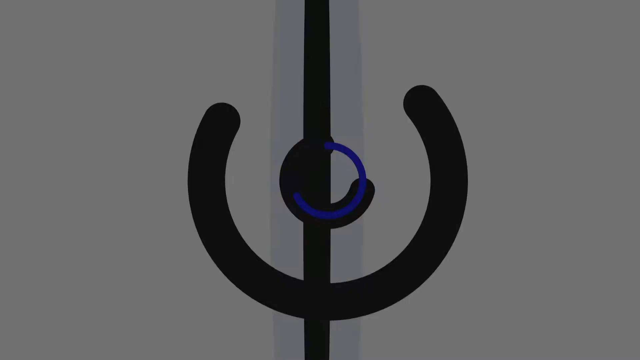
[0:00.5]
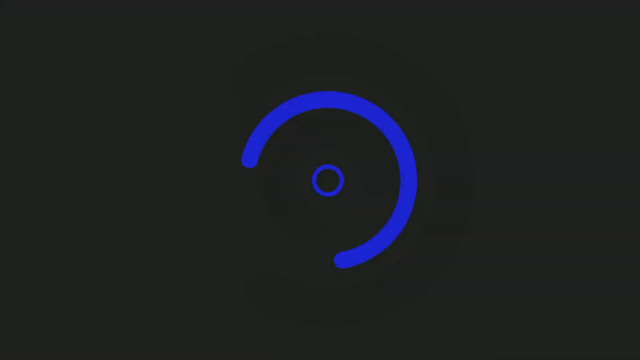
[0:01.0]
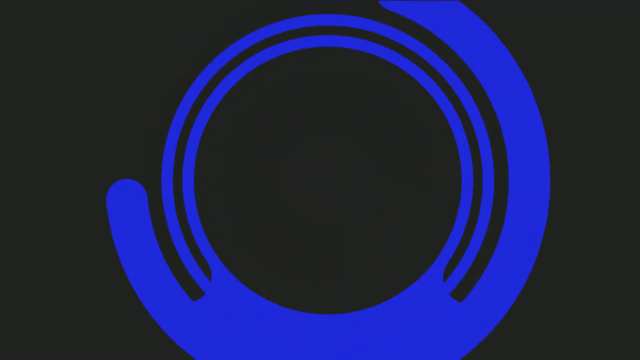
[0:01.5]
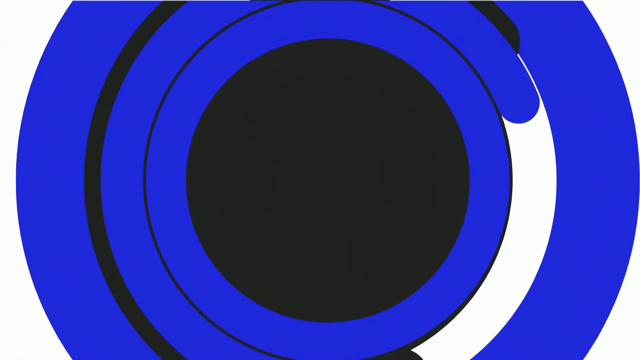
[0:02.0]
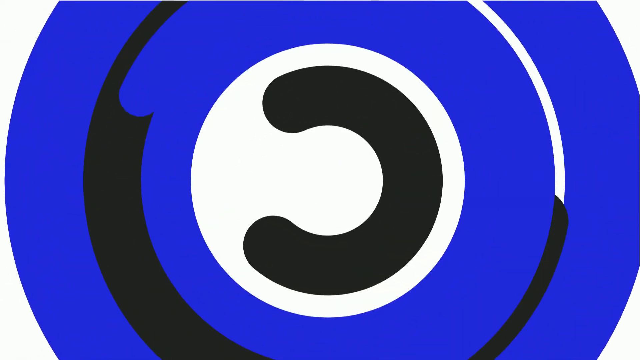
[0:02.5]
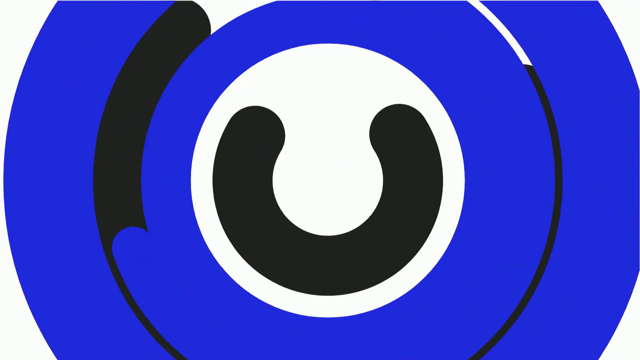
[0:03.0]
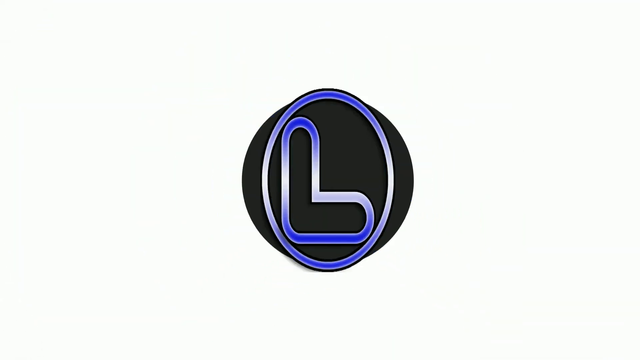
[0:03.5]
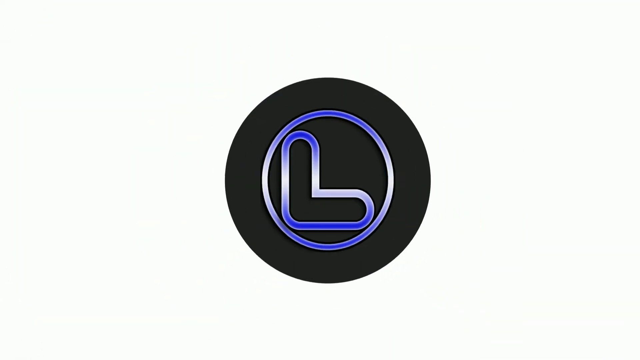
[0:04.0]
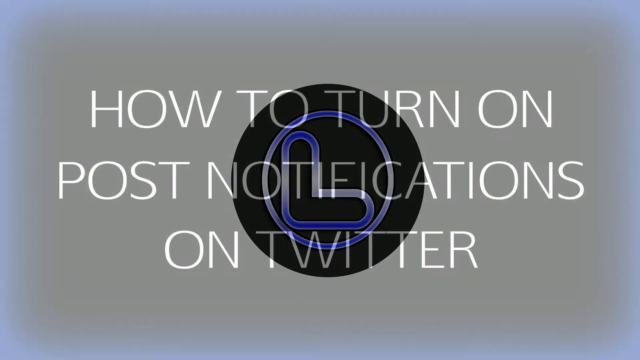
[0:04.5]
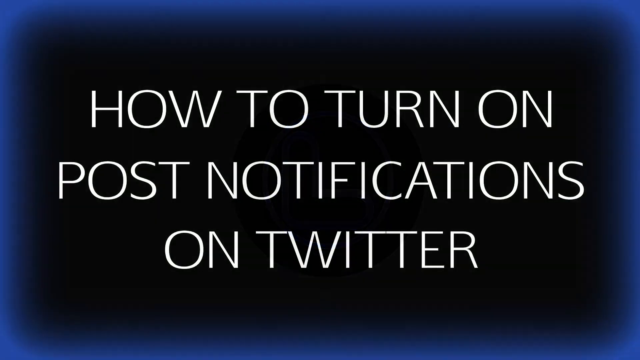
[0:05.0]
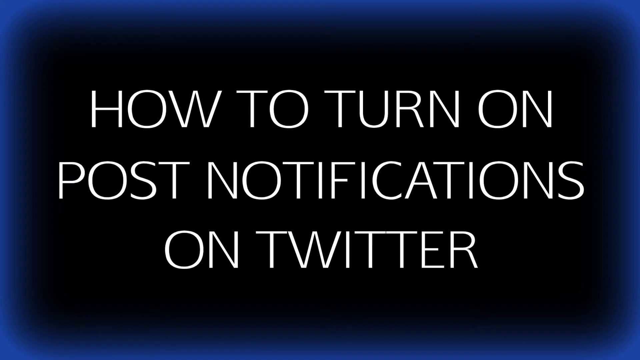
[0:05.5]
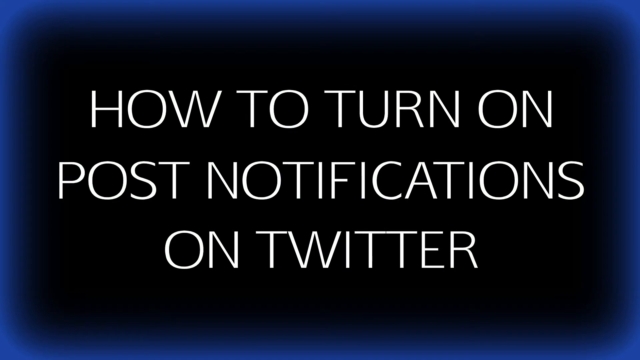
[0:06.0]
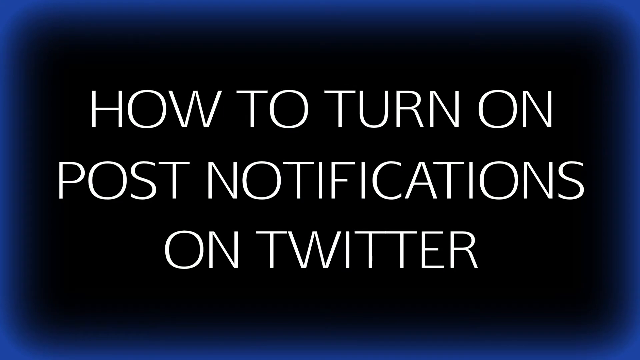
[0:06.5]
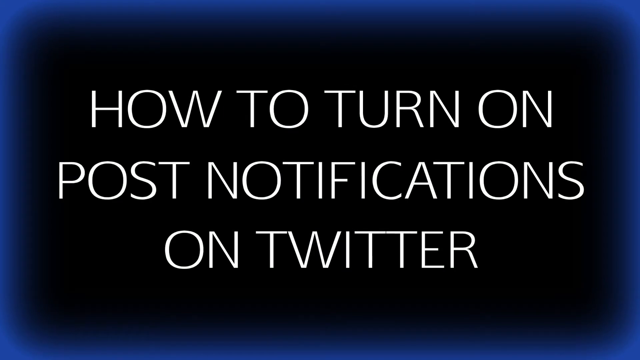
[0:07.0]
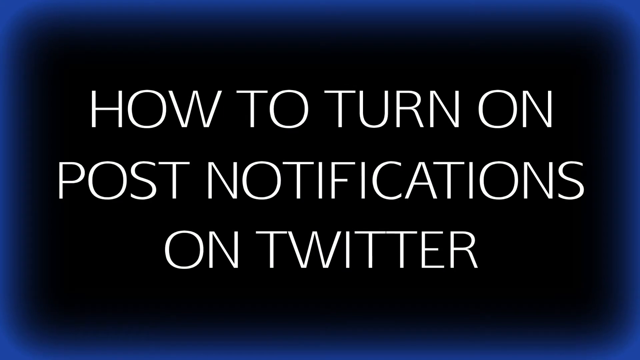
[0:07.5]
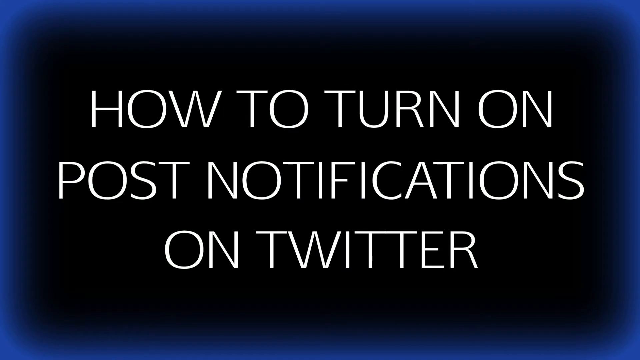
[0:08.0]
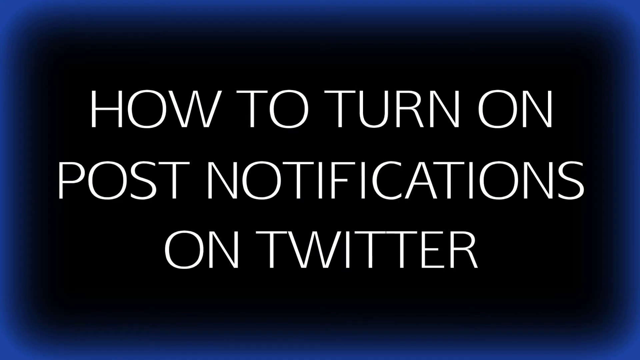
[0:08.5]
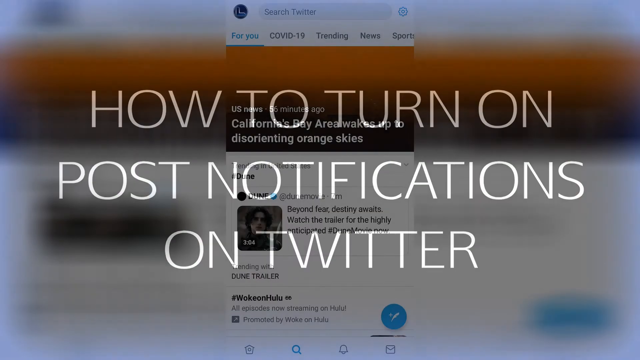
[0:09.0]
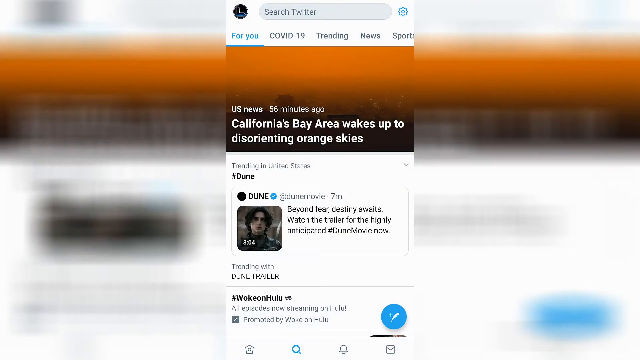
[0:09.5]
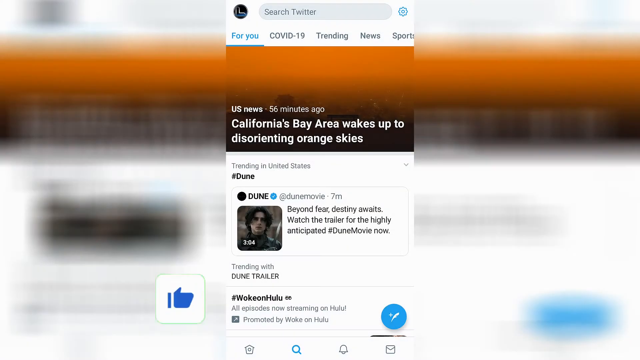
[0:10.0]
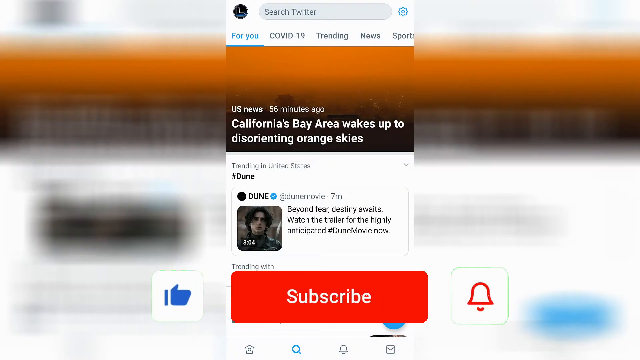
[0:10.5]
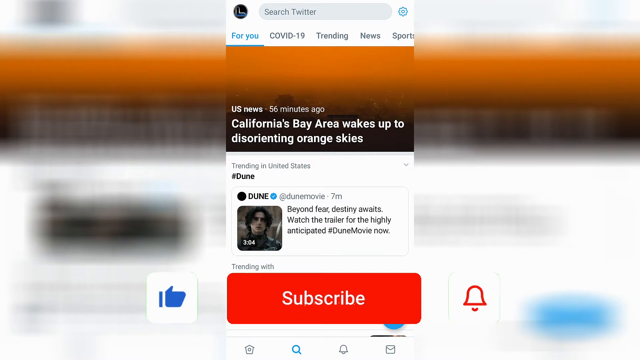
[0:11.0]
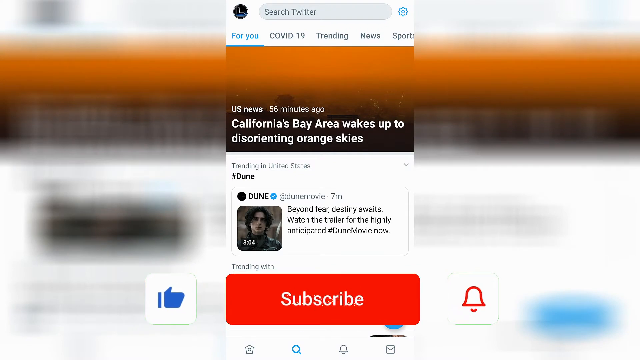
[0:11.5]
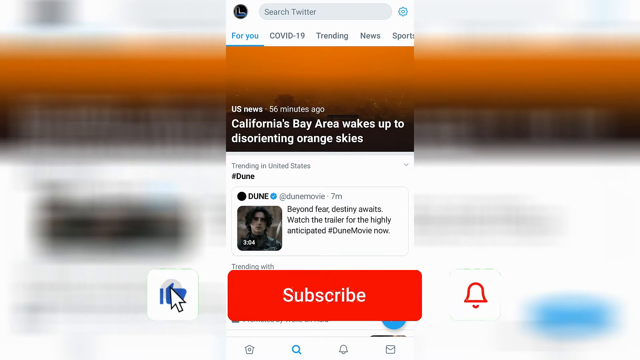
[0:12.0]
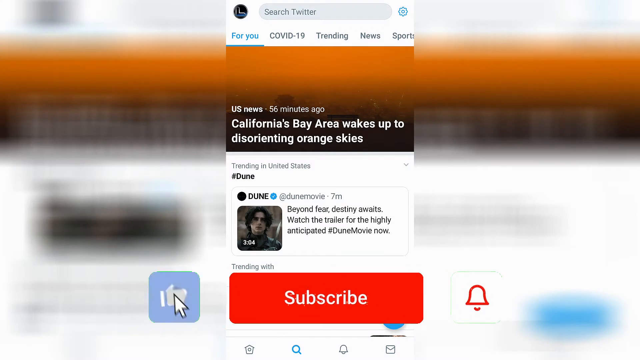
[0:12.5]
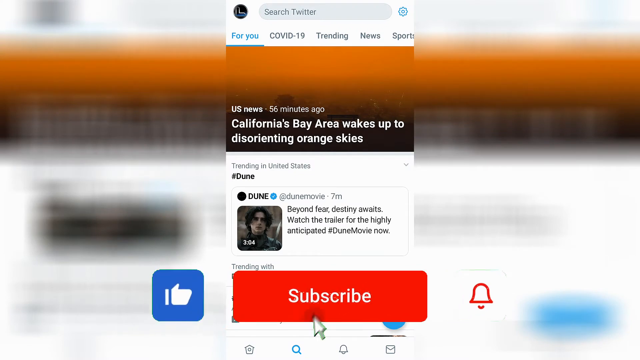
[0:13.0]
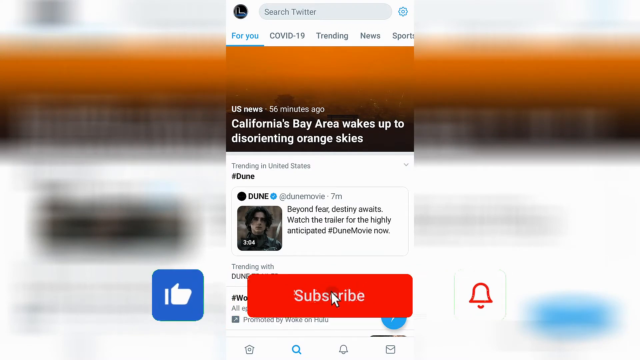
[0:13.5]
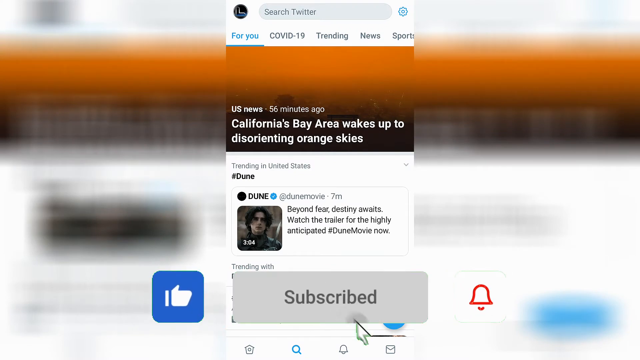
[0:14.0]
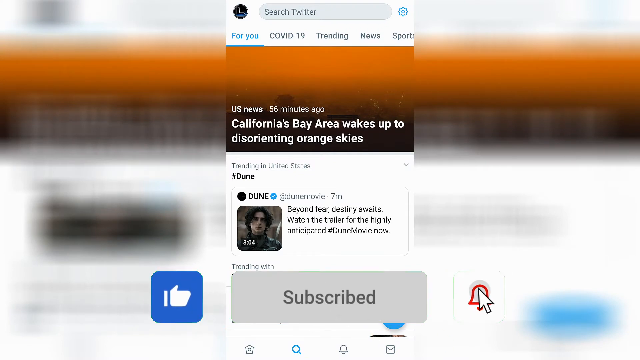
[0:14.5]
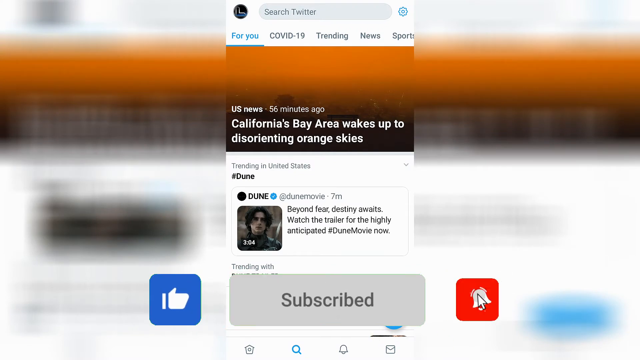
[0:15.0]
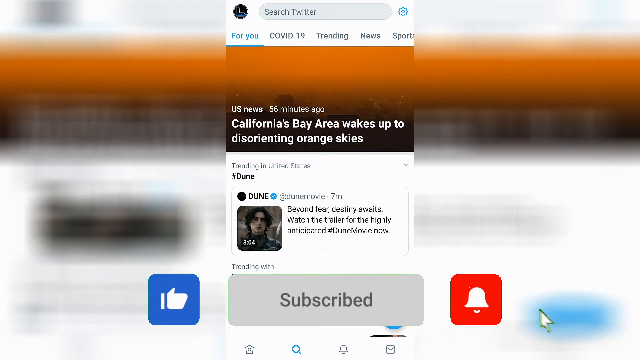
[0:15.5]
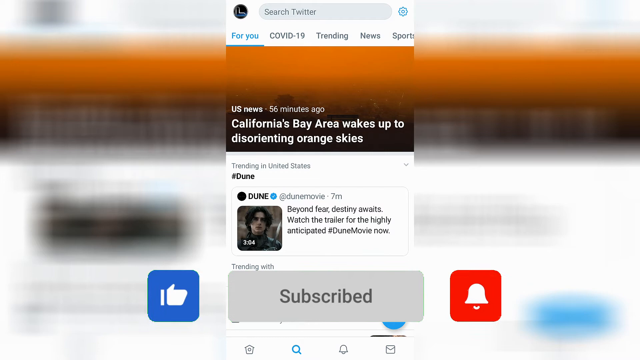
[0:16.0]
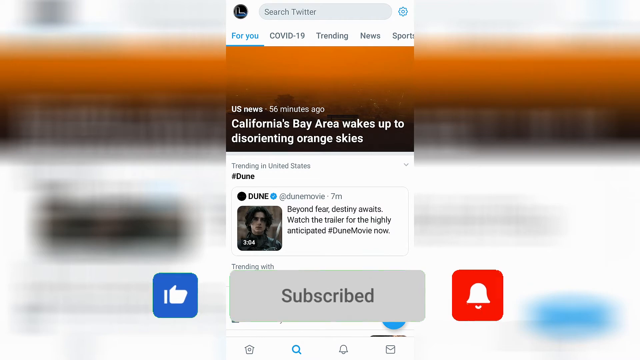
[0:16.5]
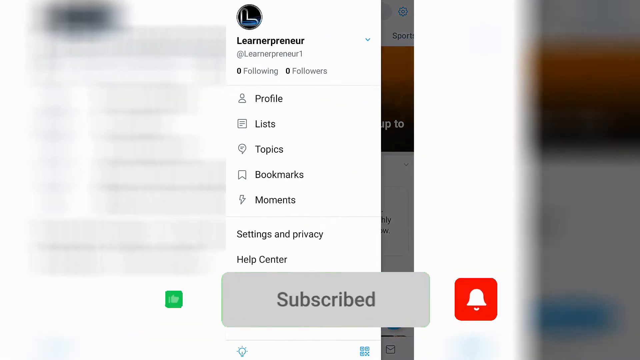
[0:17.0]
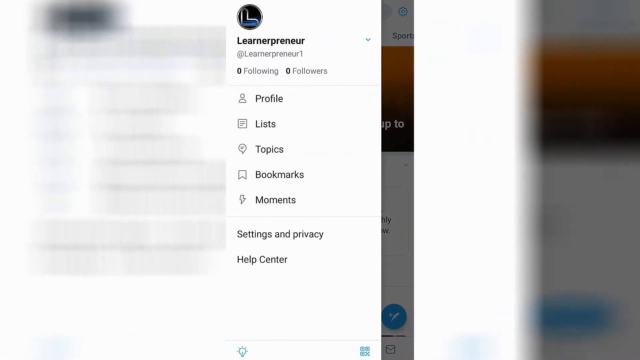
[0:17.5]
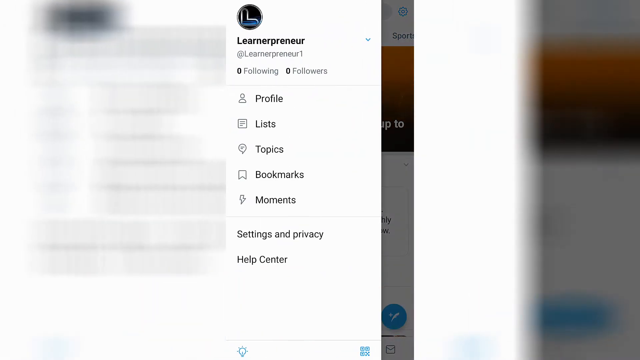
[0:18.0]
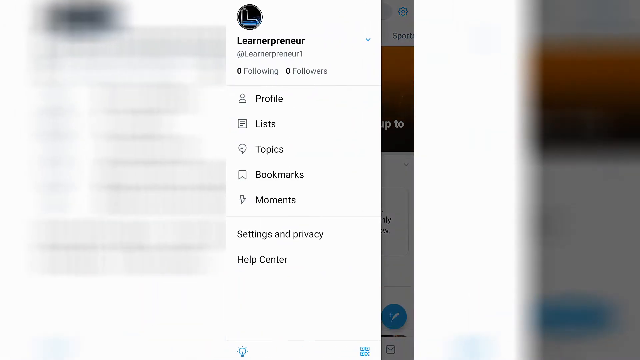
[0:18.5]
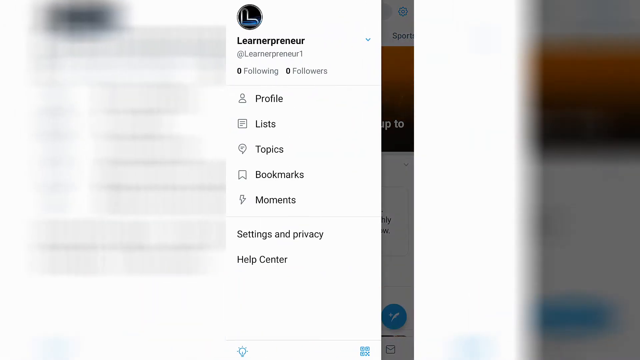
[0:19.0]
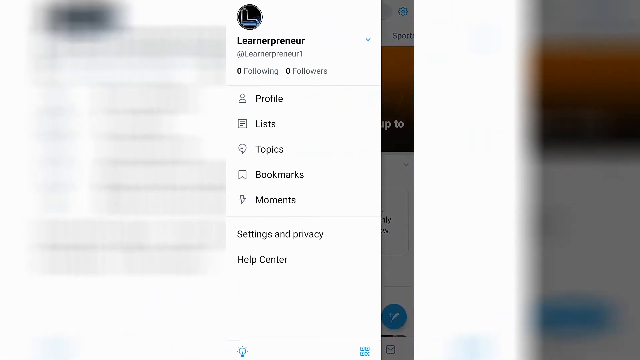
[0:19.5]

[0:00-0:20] Black and blue concentric circles open the video. The blue concentric circles expand to fill the screen, and a white circle appears inside them with another black rotating circle in the middle. This collapses into a smaller black circle in the middle of the screen, and inside that black circle is a blue and white gradient circle. In the middle of that circle is a bubble letter L made of the same blue and white gradient line. The black circle behind it slowly expands, and then a gradient appears, black radiating outward into dark blue, covering the entire screen. On that gradient, white text reads "how to turn on post notifications on Twitter," and it stays like that for a few seconds before fading into the light mode Twitter app. The Twitter app is in the middle of the screen, and behind it, to the left and right, is the same app, blurred and stretched to fill the screen. In the upper left-hand corner of the app is the L logo, and to the right of that is the search bar reading "search Twitter," followed by a blue gear settings logo. Underneath are tabs: "for you" in blue, then "COVID-19," "trending," "news," and "sports," which is slightly cut off by the edge of the app. Below that is a picture of an orange sky with white text along the bottom reading "U.S. news 56 minutes ago," and under it "California's Bay Area wakes up to disorienting orange skies." The white Twitter interface continues with "trending in United States #Dune." Under that is a tweet by the Dune movie account with a picture of Timothee Chalamet, dressed as Paul Atreides from the Dune movie, in a square portion; the lower left-hand corner of the square shows a duration of three minutes four seconds. To the right, the tweet reads "Beyond fear destiny awaits. Watch the trailer for the highly anticipated #DuneMovie now." Beneath the tweet it says "trending with Dune trailer," then "#WokeonHulu," then "all episodes now streaming on Hulu," and under that an arrow with "promoted." Over this, three rounded buttons appear: a rounded white square with a blue thumbs-up icon, a red rounded rectangle with the word "subscribe" in white, and to the right a rounded white square with a red bell icon. The buttons float around a little. A cursor pops up and clicks the thumbs-up square, turning the white of the square blue and the blue thumbs-up icon white. The cursor then clicks the subscribe button, turning its red part gray and its white part a darker gray. Next the cursor clicks the bell, which makes a sort of ringing motion; the background of the icon turns red and the formerly red bell turns white. Sliding in from the left is the Learnerpreneur account sidebar: the L logo, the word "Learnerpreneur," and "@Learnerpreneur1" beneath it, followed by "0 following" and "0 followers." Below a line are the profile icon with "profile," the list icon with "lists," the topics icon, which looks like a speech bubble, with "topics," the bookmarks icon with "bookmarks," and a lightning bolt icon with "moments." Under another line are "settings and privacy" and "help center."